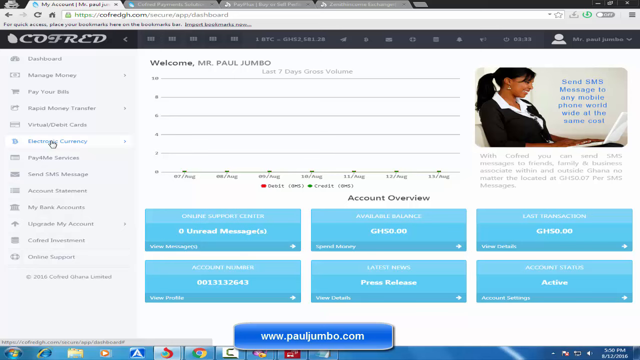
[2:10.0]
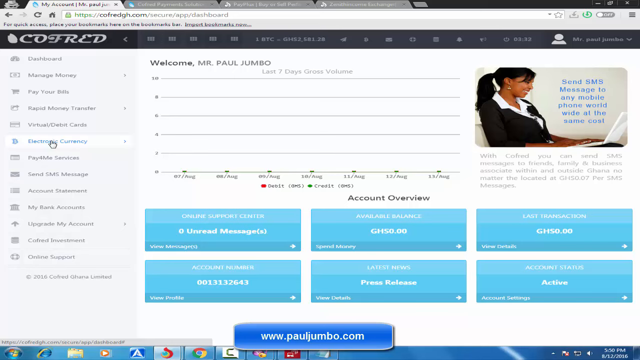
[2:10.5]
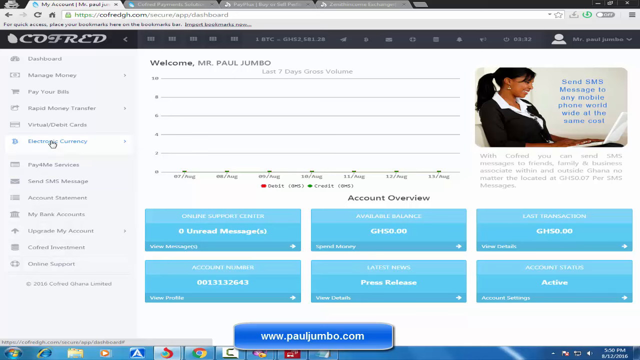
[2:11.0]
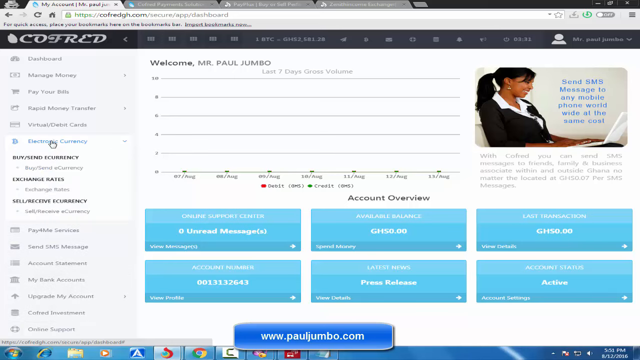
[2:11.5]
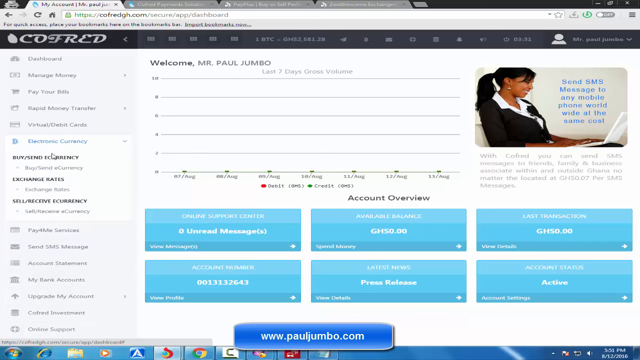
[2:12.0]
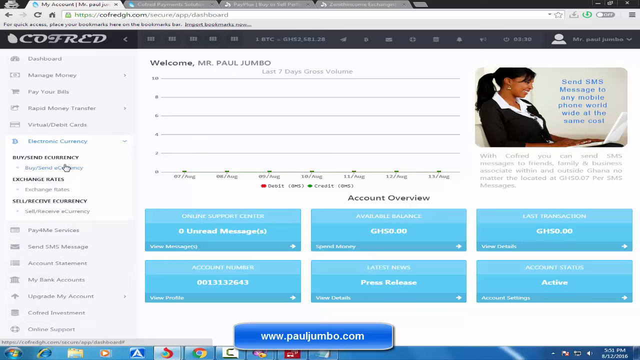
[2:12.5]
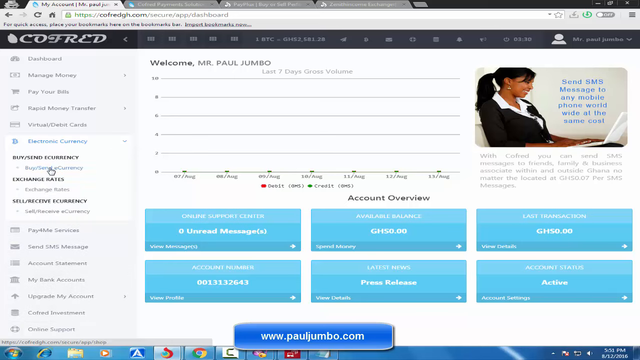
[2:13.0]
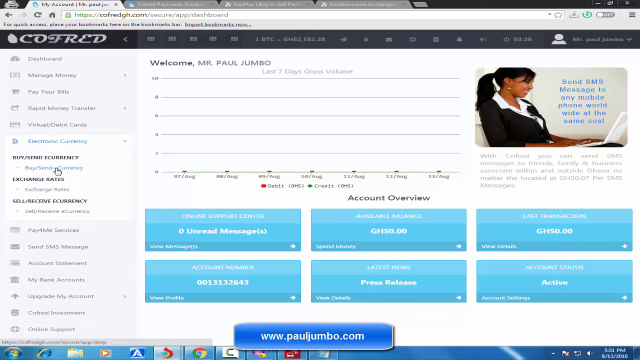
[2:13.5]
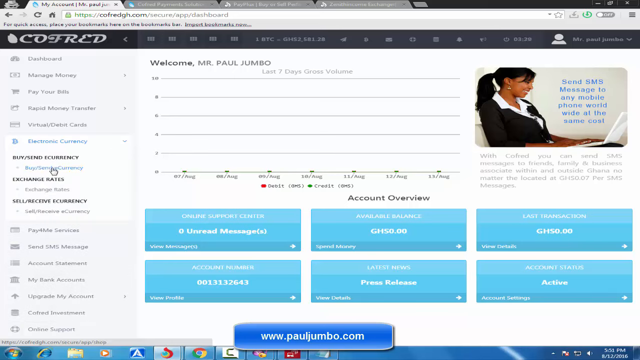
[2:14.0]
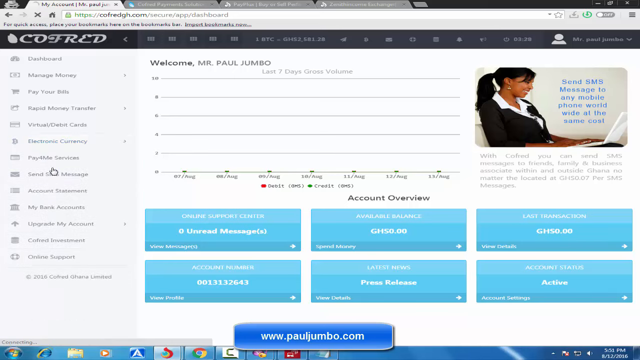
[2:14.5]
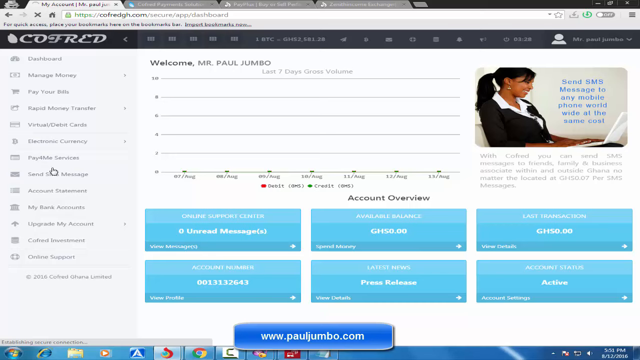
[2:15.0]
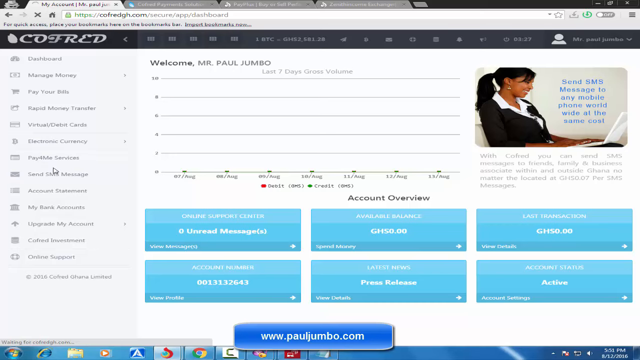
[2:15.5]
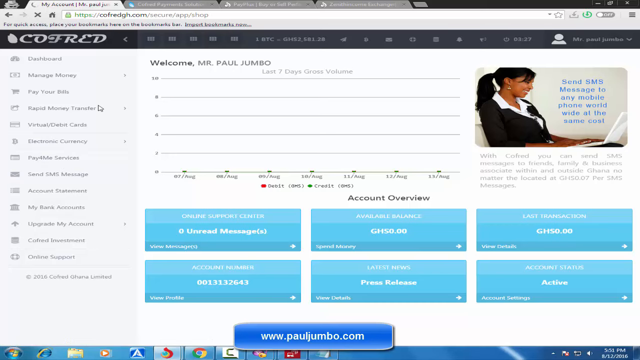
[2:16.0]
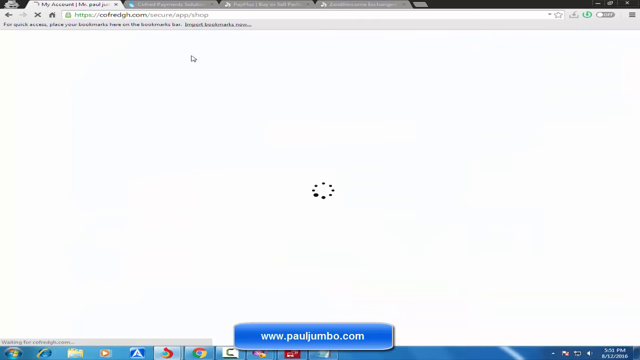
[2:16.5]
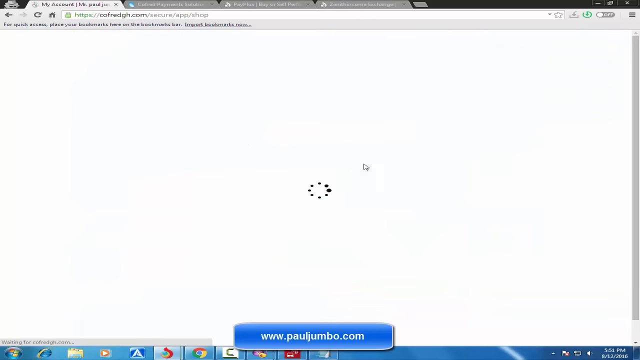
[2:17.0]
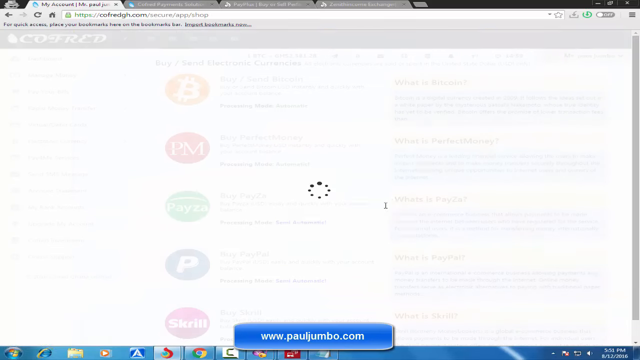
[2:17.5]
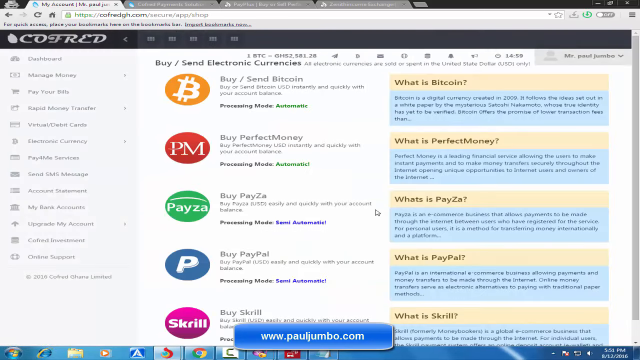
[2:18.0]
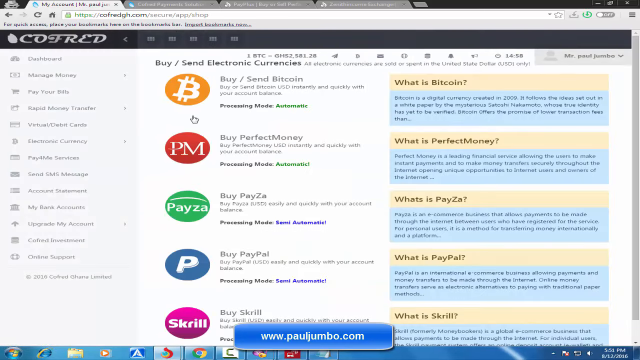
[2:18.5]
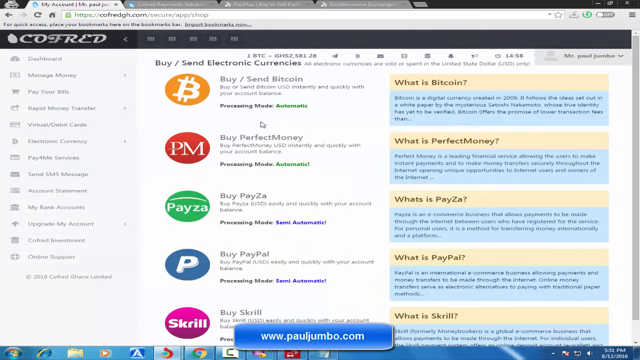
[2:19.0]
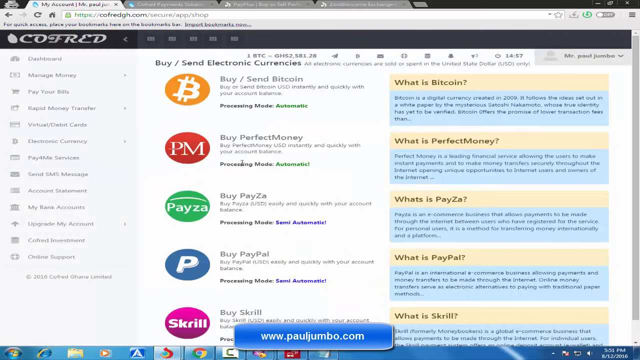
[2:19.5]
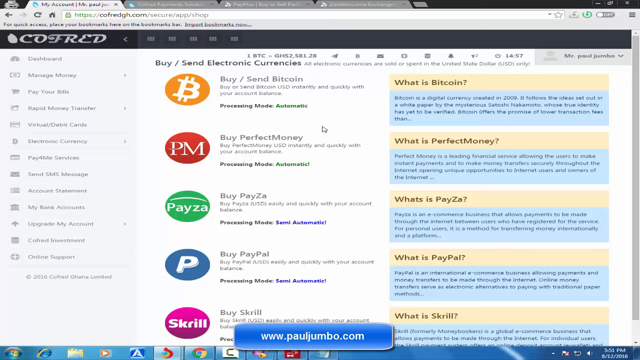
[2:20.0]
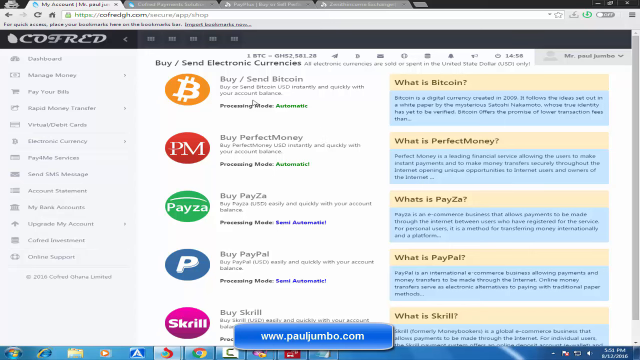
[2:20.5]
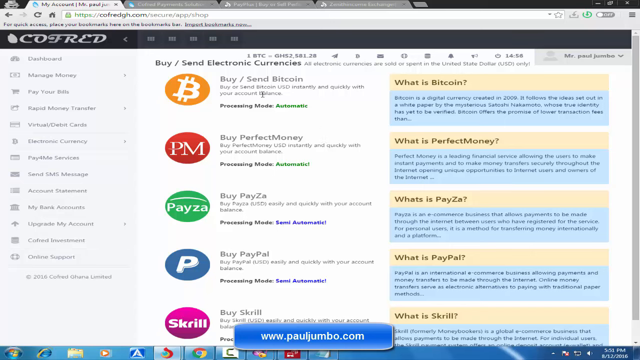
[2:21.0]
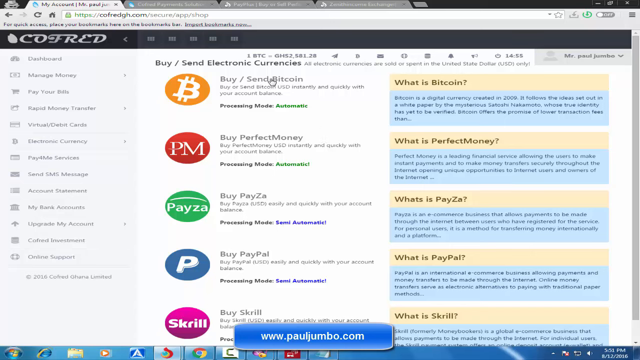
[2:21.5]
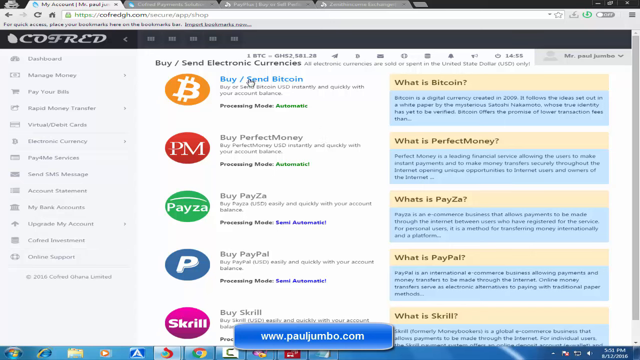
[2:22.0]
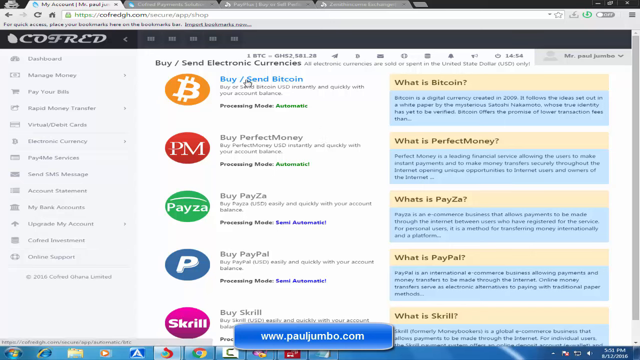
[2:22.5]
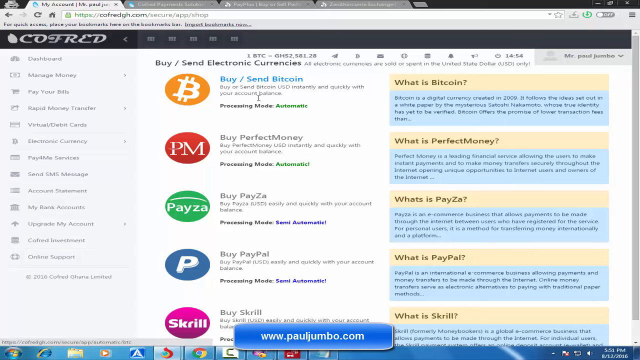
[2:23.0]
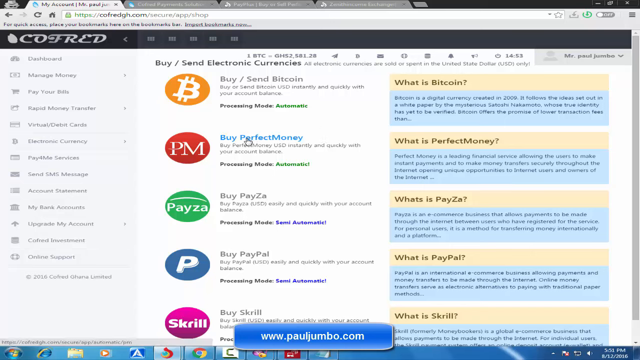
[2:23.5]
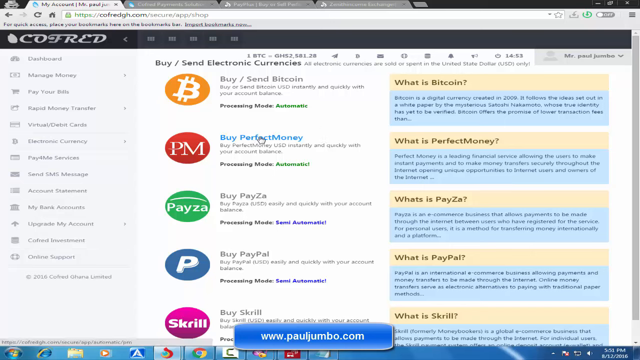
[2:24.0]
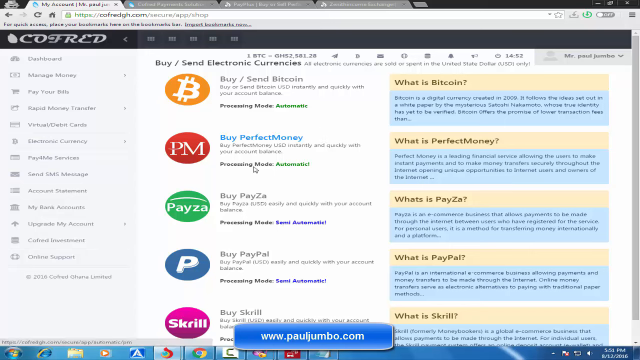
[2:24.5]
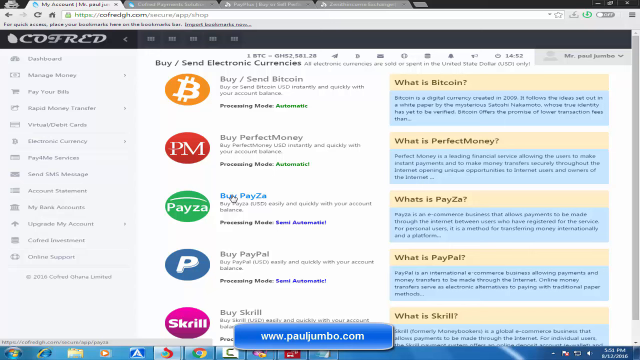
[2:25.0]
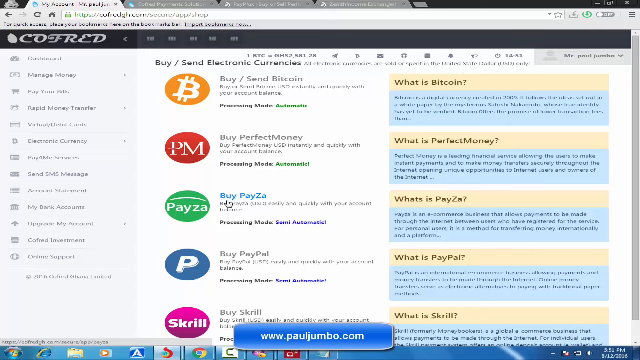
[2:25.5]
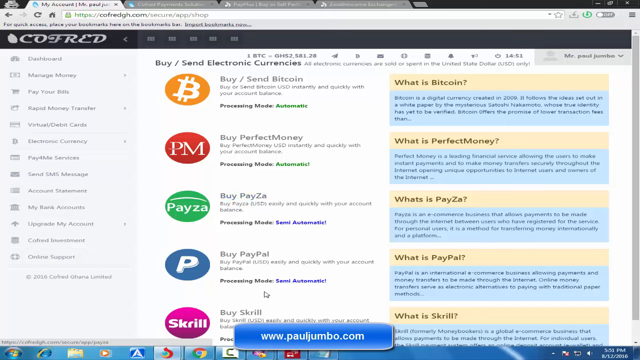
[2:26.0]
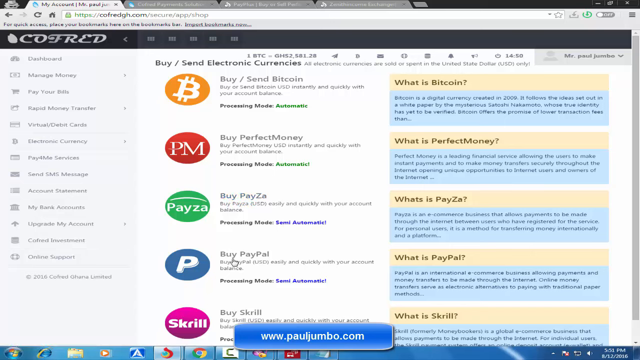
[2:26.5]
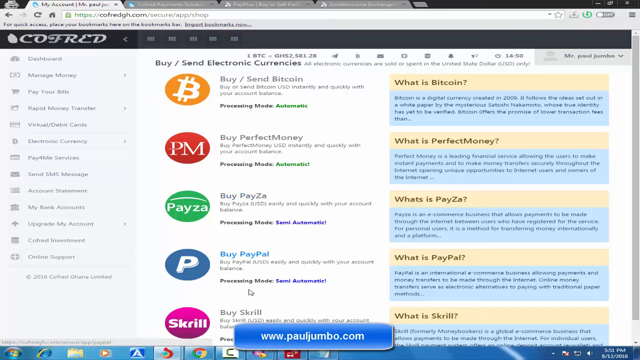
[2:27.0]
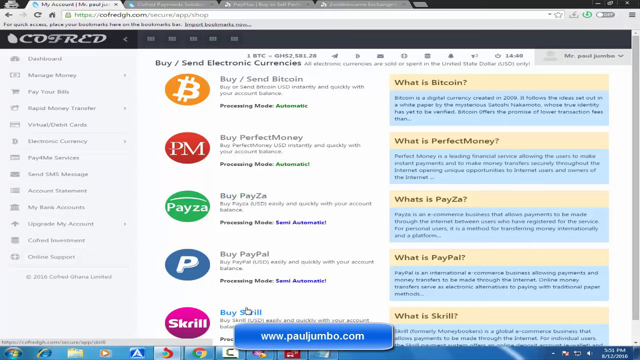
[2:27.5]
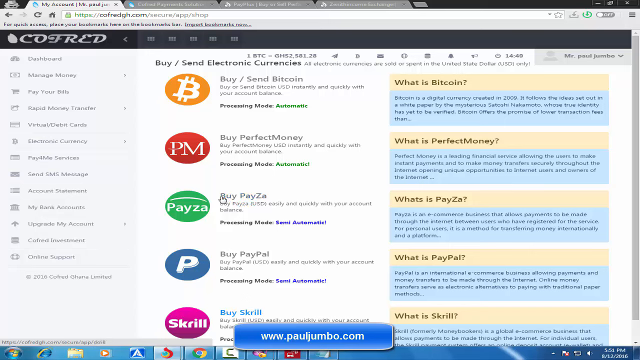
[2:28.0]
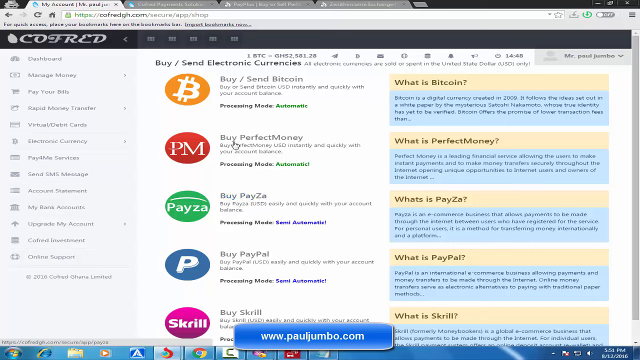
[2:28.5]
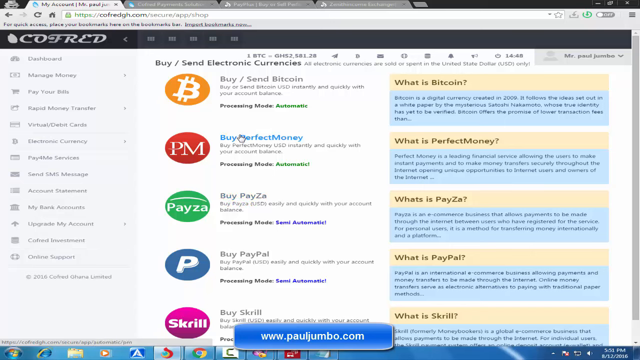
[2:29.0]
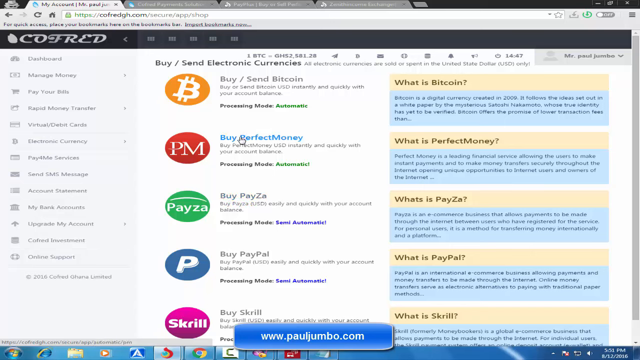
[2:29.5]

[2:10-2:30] A picture of a person is in the upper right corner of the computer screen: a woman with a ponytail, a white shirt and a black jacket, with an earring on her right ear, looking down at a laptop and laughing. Six lines of blue words are between her and the laptop. To her left are seven columns going across, which look like they could be an index comparing different times and amounts. The screen says "welcome, Mr. Air Paul Jumbo", with six lines on the left side. Across the bottom are seven small green bullets with words underneath each. Below is "account overview" with six blue boxes. The cursor comes to the left and clicks on some wording. The next section has a scroll bar on the left; the middle column has four items reading "buy, buy perfect money, buy pay FX, buy PayPal", and the right column reads "what is a Bitcoin", "what is perfect money", "what is AB" and "what is PayPal".